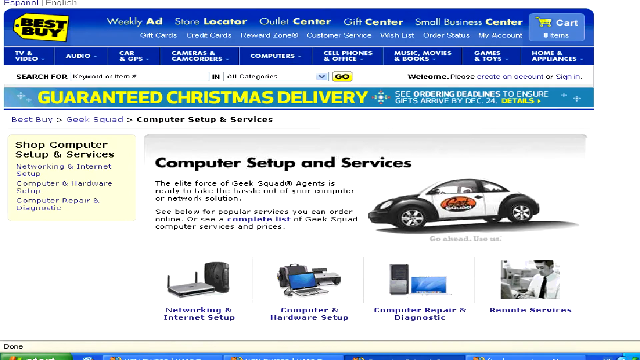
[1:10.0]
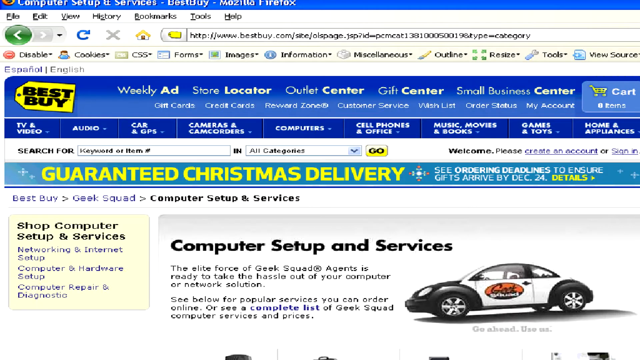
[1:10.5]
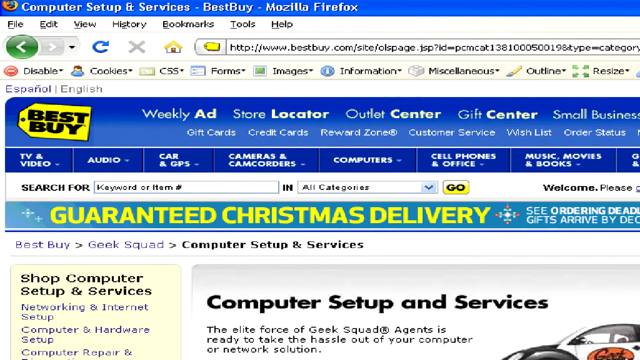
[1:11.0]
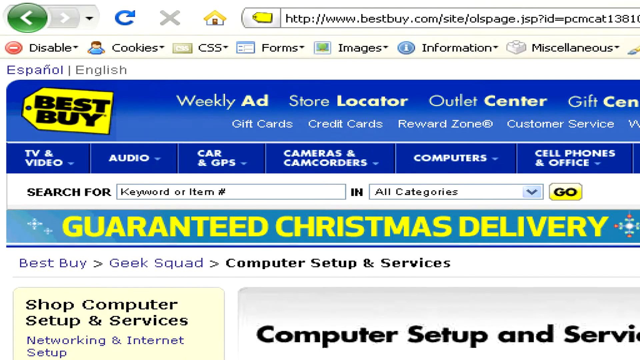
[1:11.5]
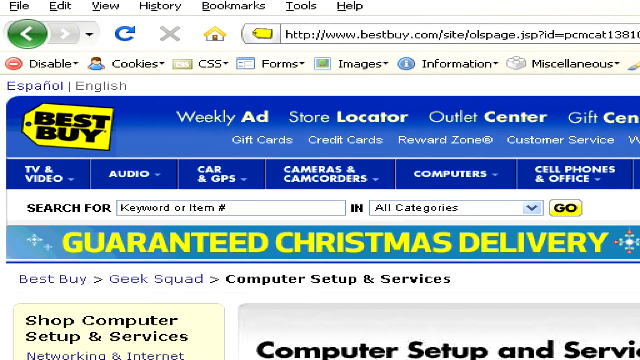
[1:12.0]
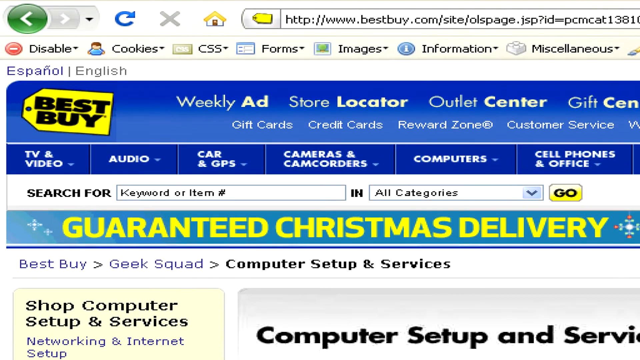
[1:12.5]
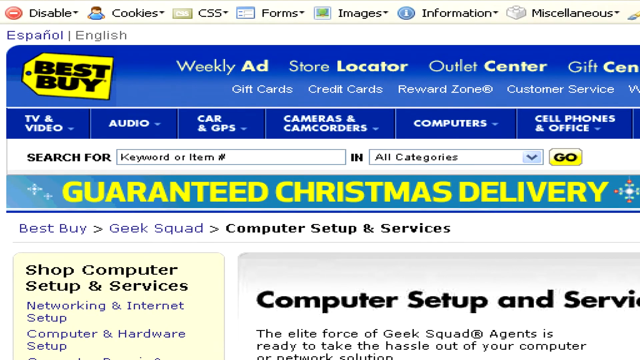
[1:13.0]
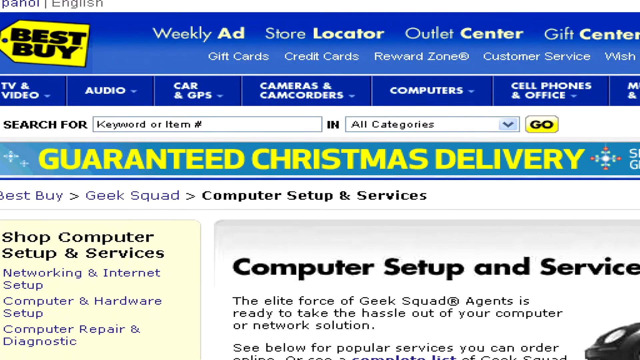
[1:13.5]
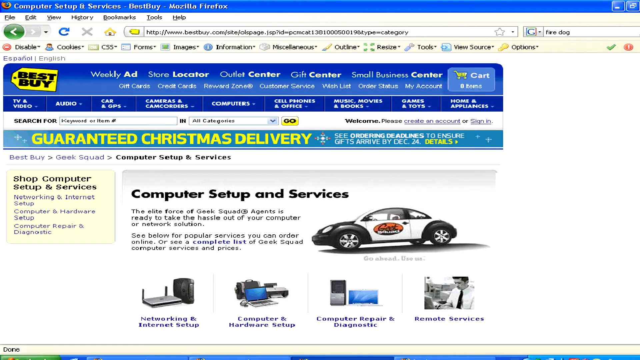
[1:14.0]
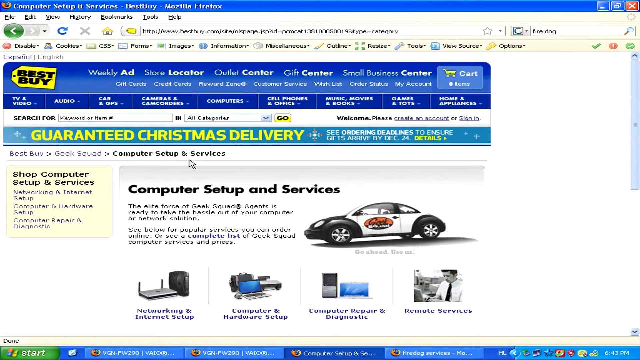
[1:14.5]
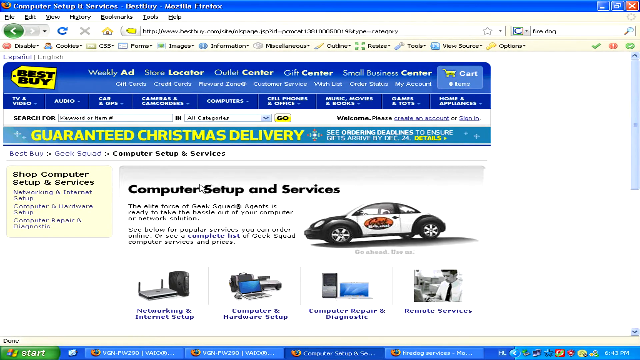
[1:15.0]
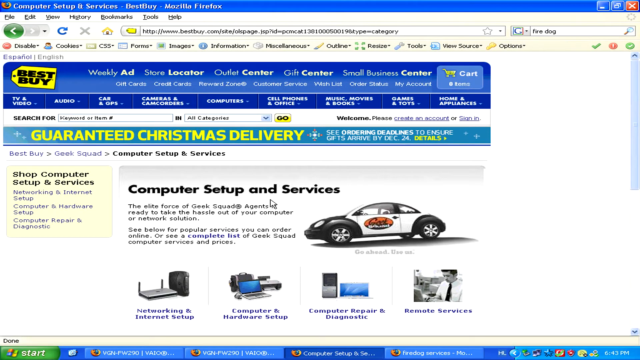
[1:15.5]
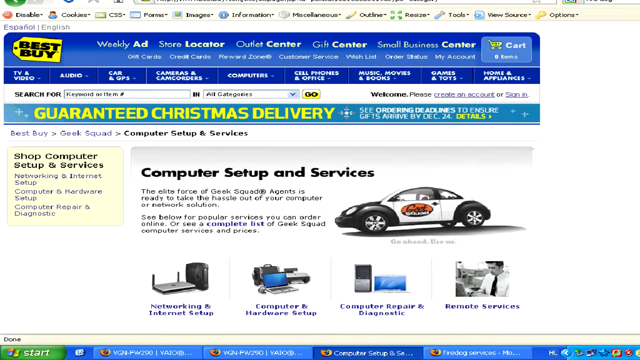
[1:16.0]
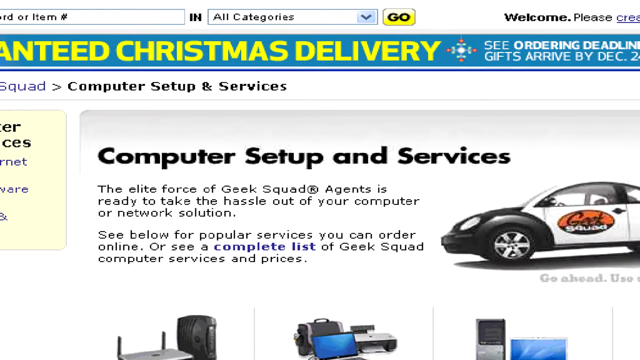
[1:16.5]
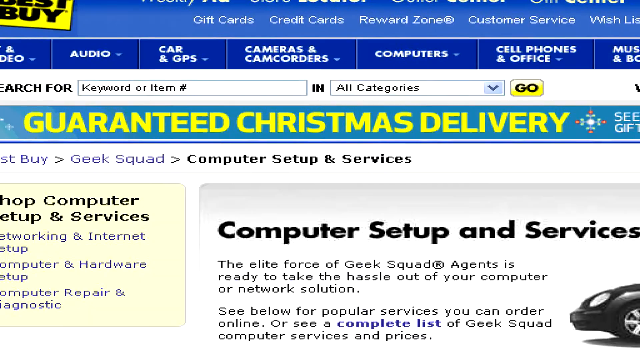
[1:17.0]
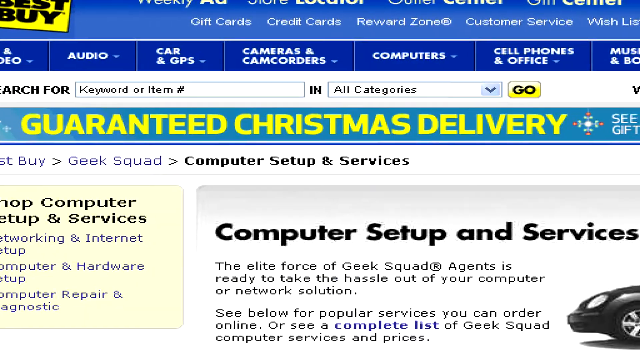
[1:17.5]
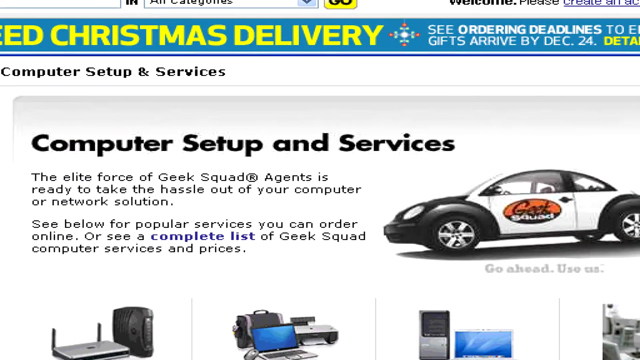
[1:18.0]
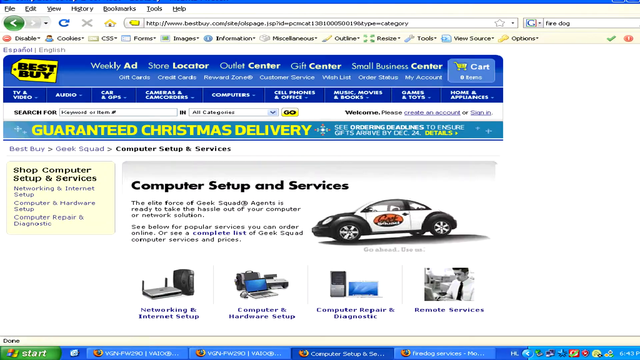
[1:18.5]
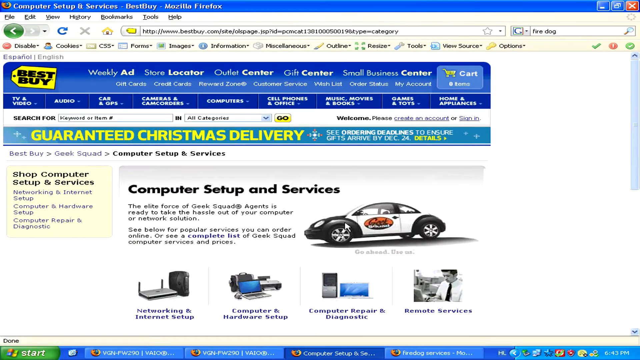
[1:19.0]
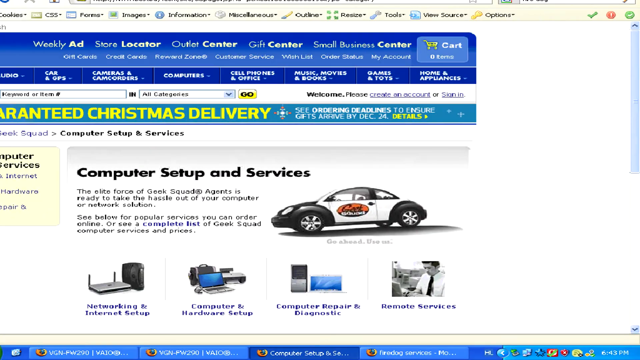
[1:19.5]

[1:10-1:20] A Best Buy website shows text such as "Guaranteed Christmas Delivery" and "Shop Computer Setup and Services" for Networking and Internet Setup, Computer and Hardware Setup, and Computer Repair and Diagnostic. Text to the right says "Computer Setup and Services. The elite force of Geek Squad agents is ready to take the hassle out of your computer or network solutions. See below for popular services you can order online or see a complete list of Geek Squad computer services and prices." Options listed are Networking and Internet Setup, Computer and Hardware Setup, Computer Repair and Diagnostic, and Remote Services. The view zooms in slightly on categories at the top: TV and Video, Audio, Car and GPS, Cameras and Camcorders, Computers, and Cell Phones and Office. A section says "Search for Keyword or Item in all categories", and the man repeatedly zooms in and out on these sections.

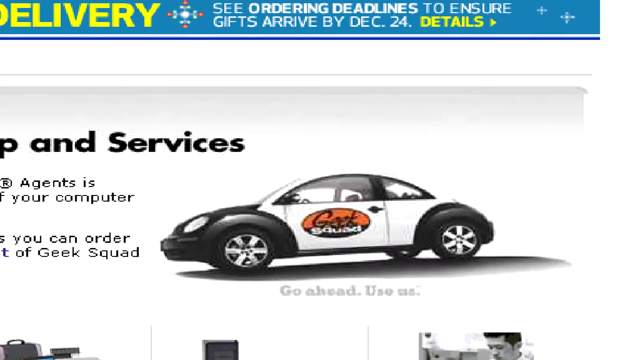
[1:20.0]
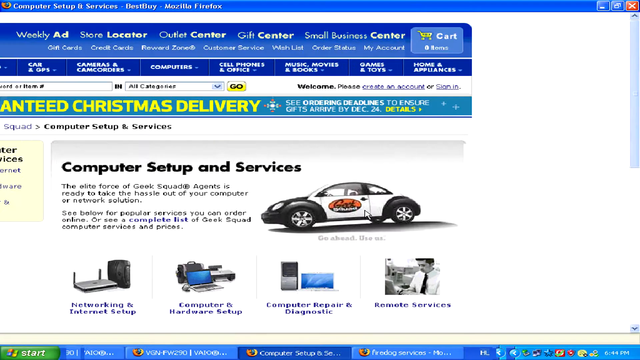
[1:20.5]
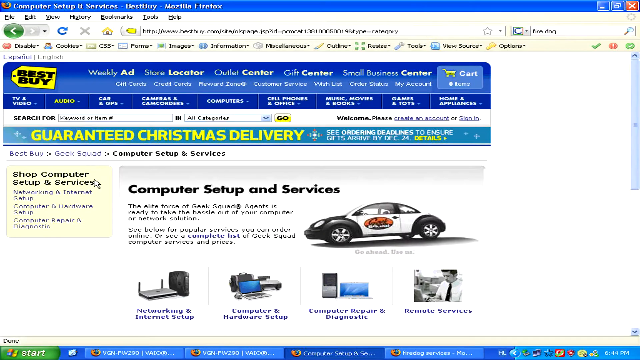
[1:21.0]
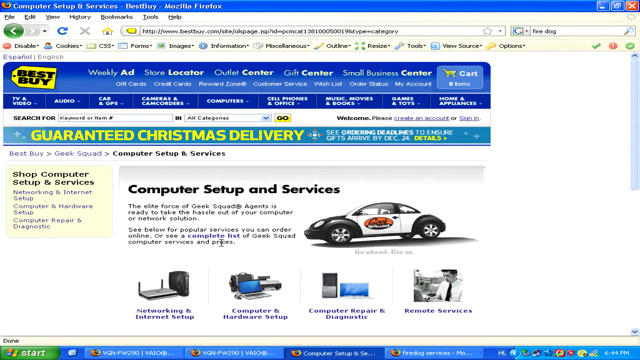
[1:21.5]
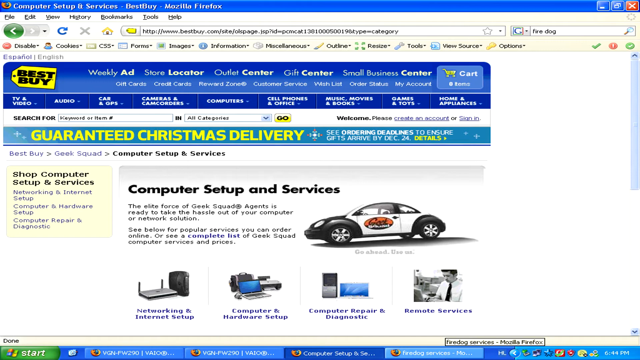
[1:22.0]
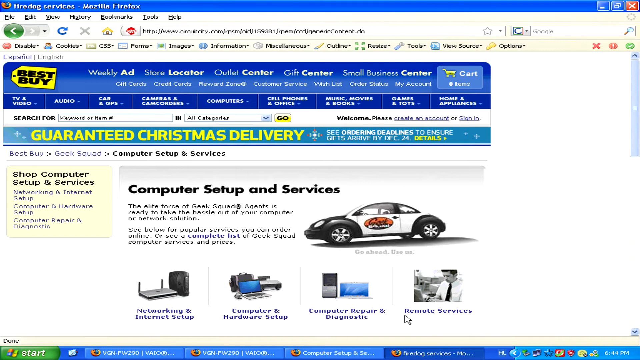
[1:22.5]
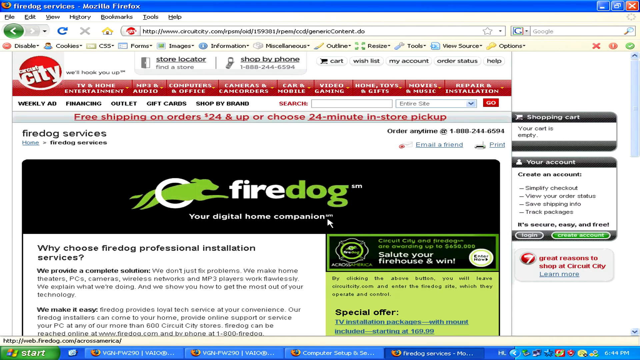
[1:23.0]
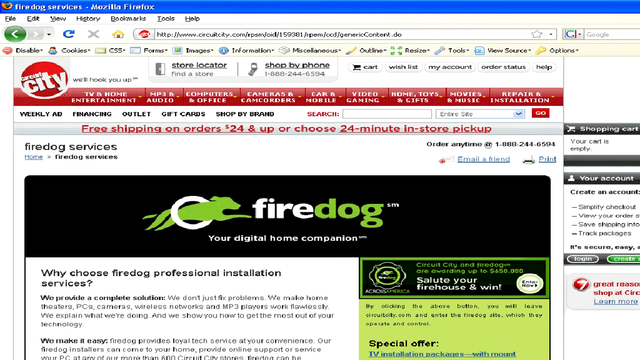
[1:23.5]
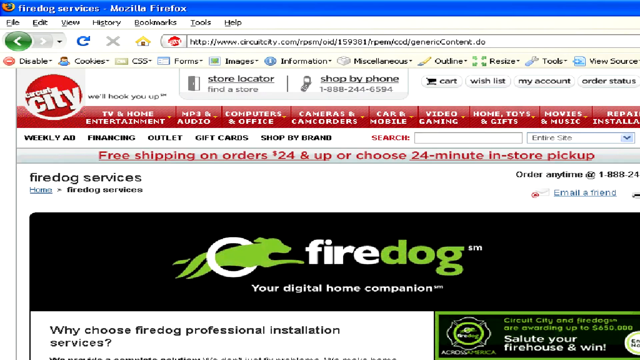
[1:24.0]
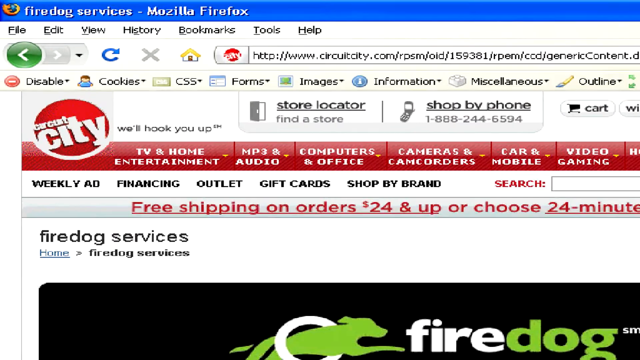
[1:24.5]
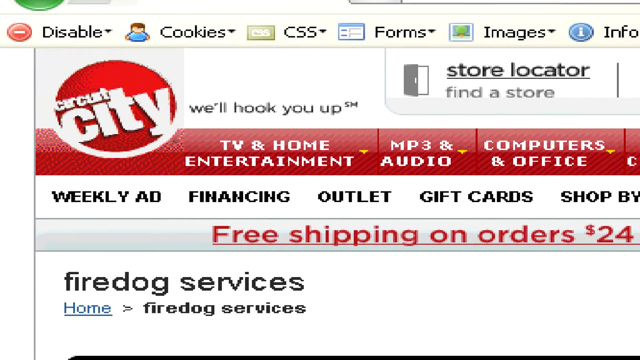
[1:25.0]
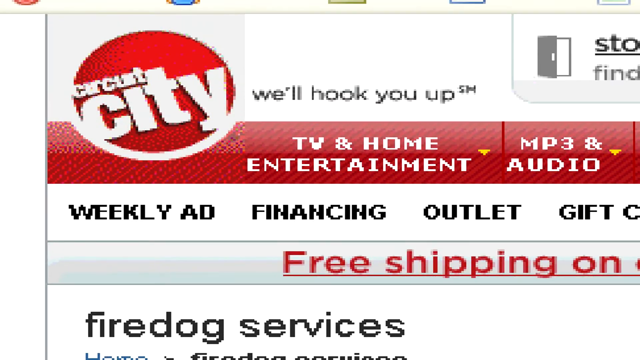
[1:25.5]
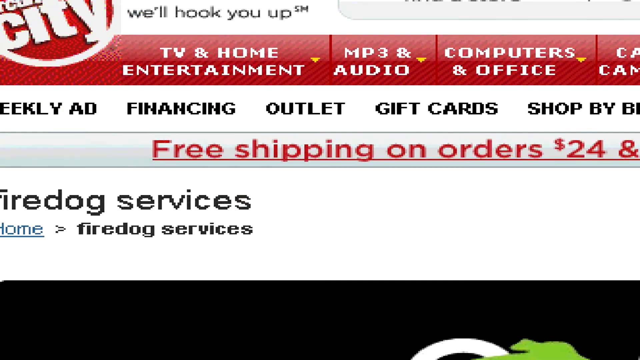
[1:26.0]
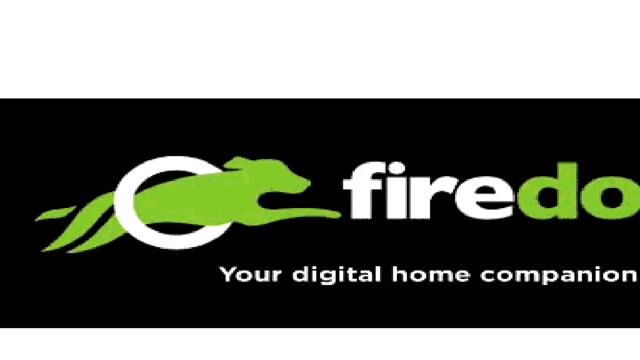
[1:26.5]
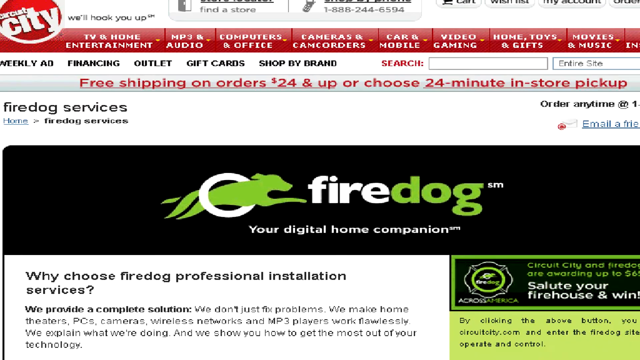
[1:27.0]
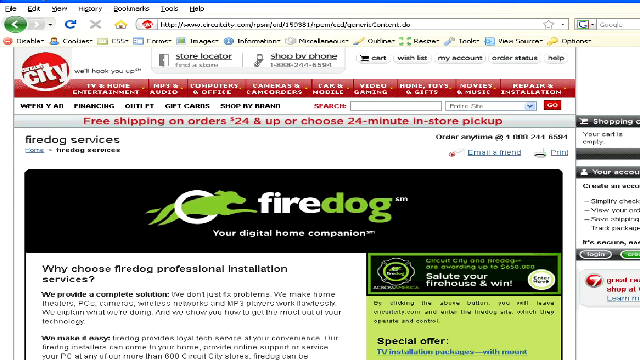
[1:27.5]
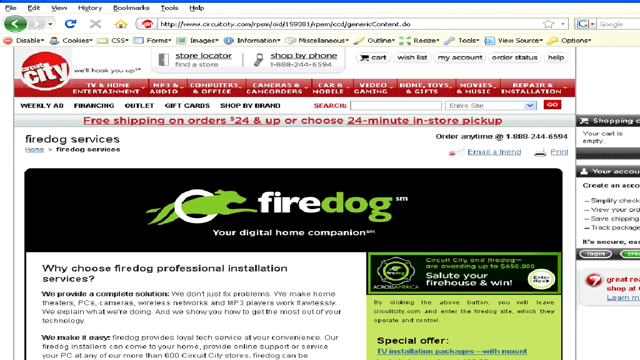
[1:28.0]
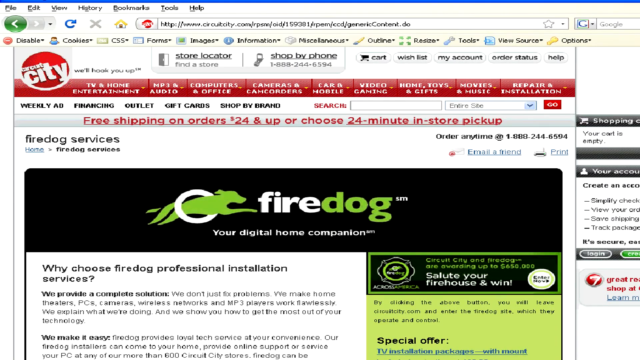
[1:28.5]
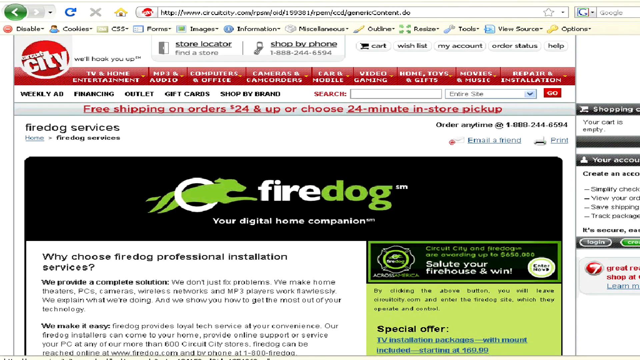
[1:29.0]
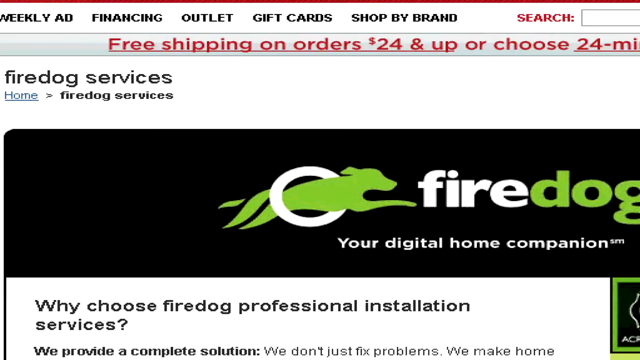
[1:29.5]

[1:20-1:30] A white and black Geek Squad car is shown, and the view zooms out onto the Best Buy website, which shows "guaranteed Christmas delivery", "shop computer setup and services", networking and internet setup, computer and hardware setup, and computer repair and diagnostic. Text says "computer setup and services, the elite force of Geek Squad agents is ready to take the hassle out of your computer or network solution. See below for popular services, you can order online or see a complete list of Geek Squad computer services and prices." The man then clicks on another browser showing "FireDog, your digital home companion" with text reading "Why choose FireDog professional installation services? We provide a complete solution. We don't just fix problems. We make home theaters, PCs, cameras, wireless networks, and mp3 players work flawlessly. We explain what we're doing and we show you how to get the most out of your technology. We make it easy. FireDog provides loyal tech services at your convenience. Our FireDog installers can come to your home, provide online support or service your PC at any of our more than 600 Circuit City stores. FireDog can be reached online at firedog.com and by phone 1-800-FIRE-DOG." Some special offers appear there. The Circuit City logo is at the top of the screen, along with categories such as TV and home entertainment, mp3 and audio, computers and office, cameras and camcorders, car and mobile, video gaming, homes, toys and gifts, music, movies, and repair and installation. Text shows free shipping available on orders $24 and up or 24-minute in-store pickup. The view zooms into that section of Circuit City, all the way into its logo and into the FireDog service part of the page.